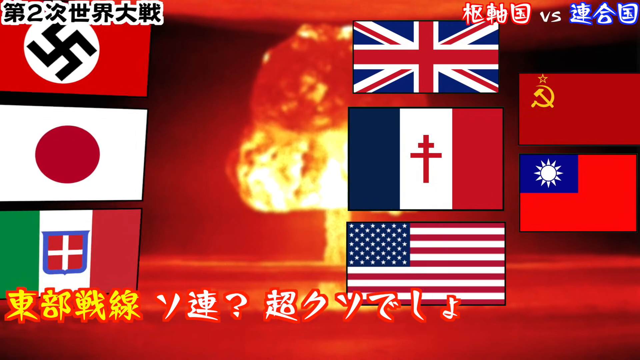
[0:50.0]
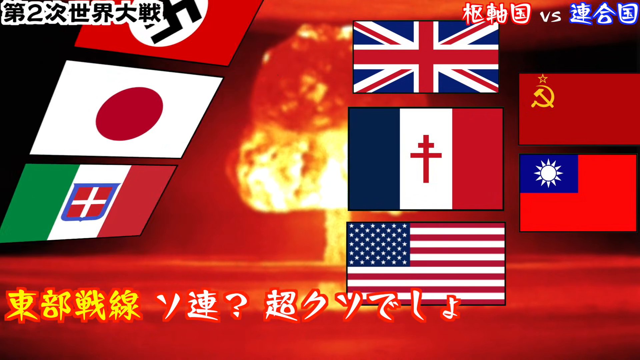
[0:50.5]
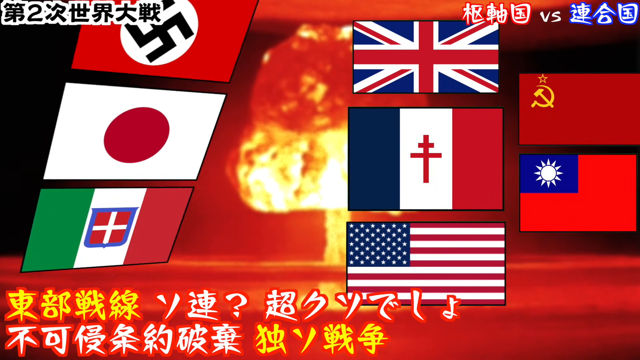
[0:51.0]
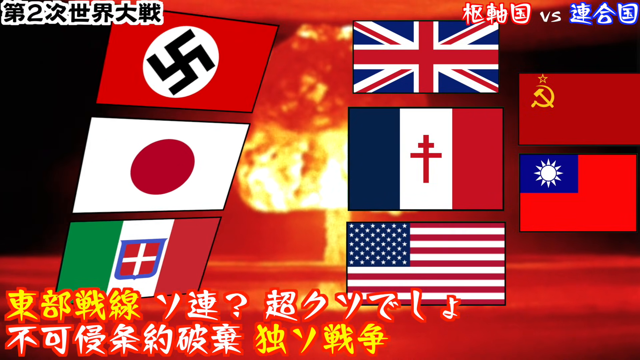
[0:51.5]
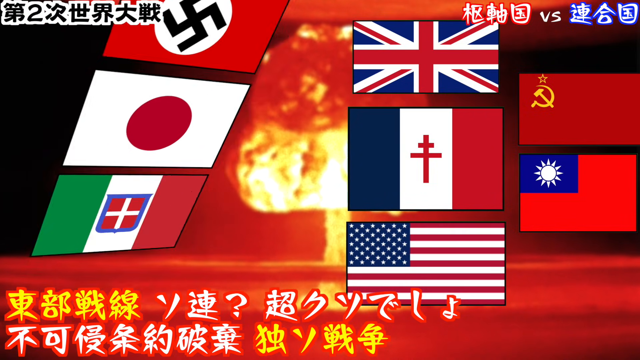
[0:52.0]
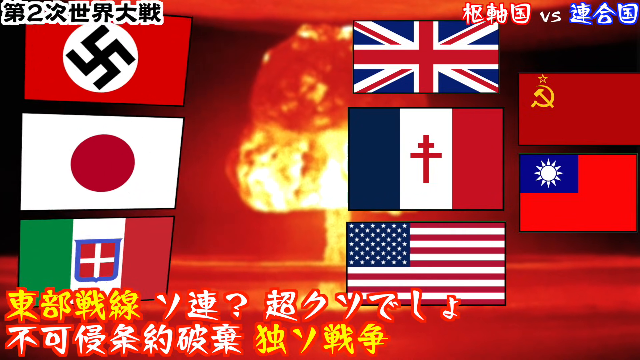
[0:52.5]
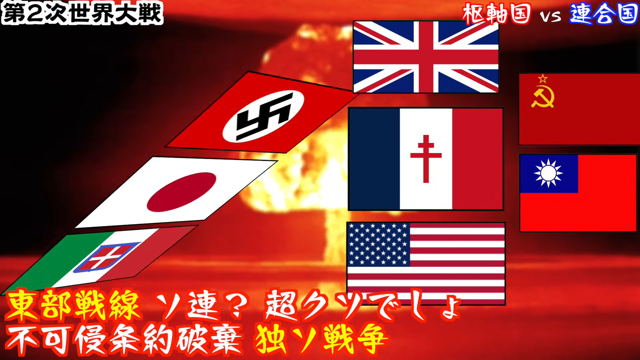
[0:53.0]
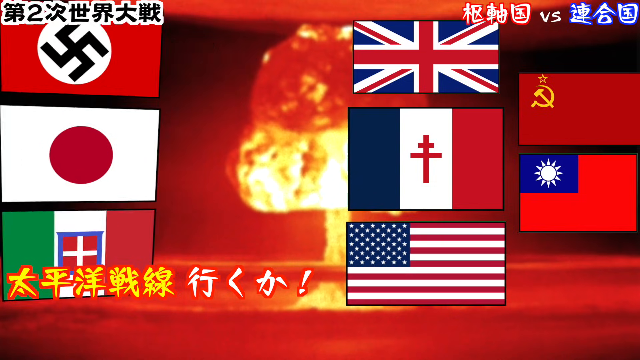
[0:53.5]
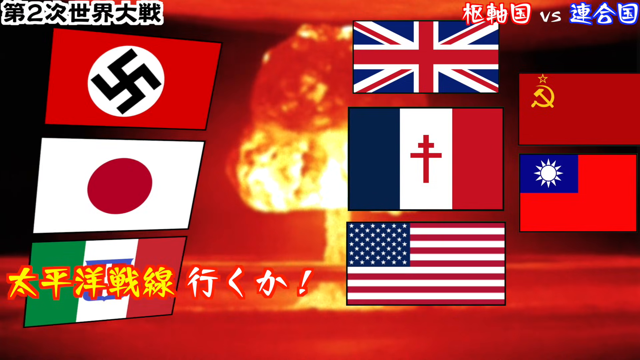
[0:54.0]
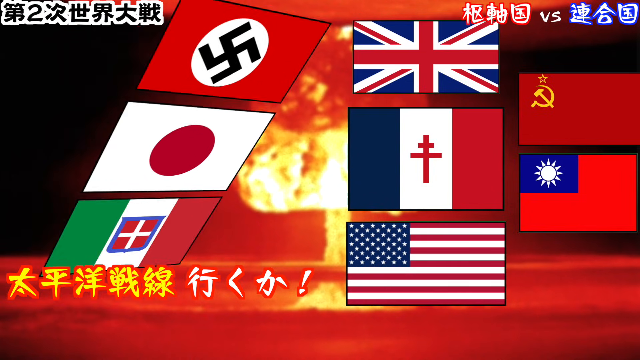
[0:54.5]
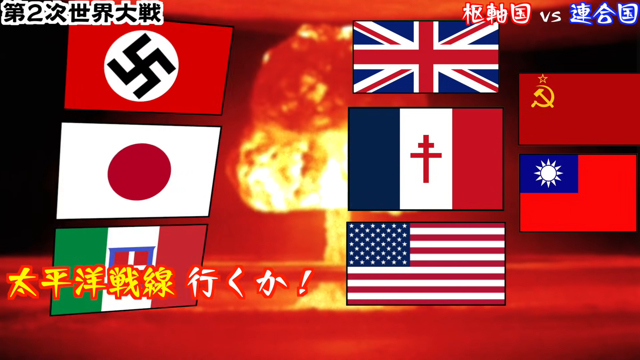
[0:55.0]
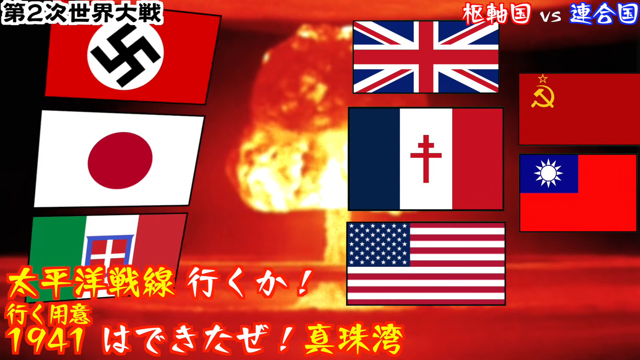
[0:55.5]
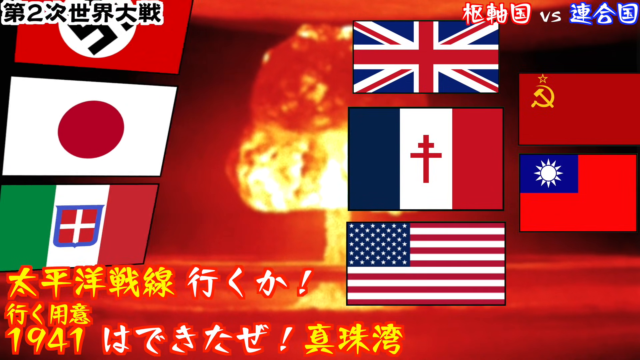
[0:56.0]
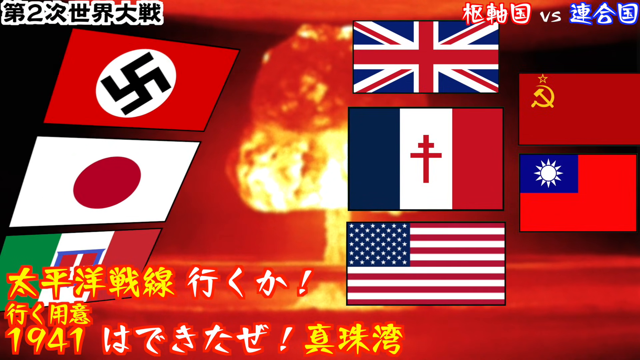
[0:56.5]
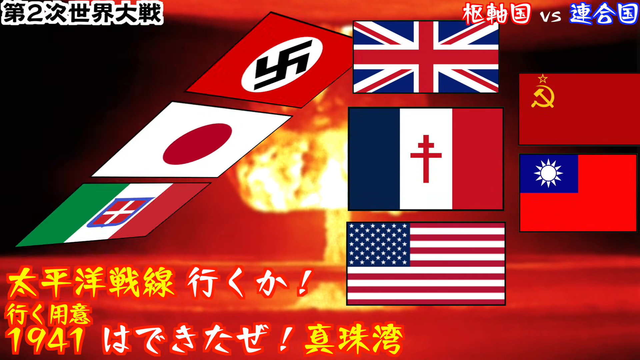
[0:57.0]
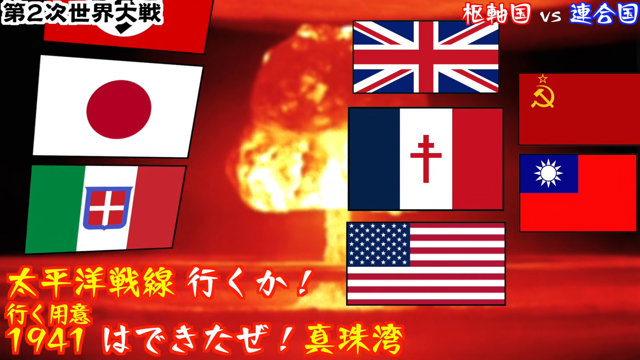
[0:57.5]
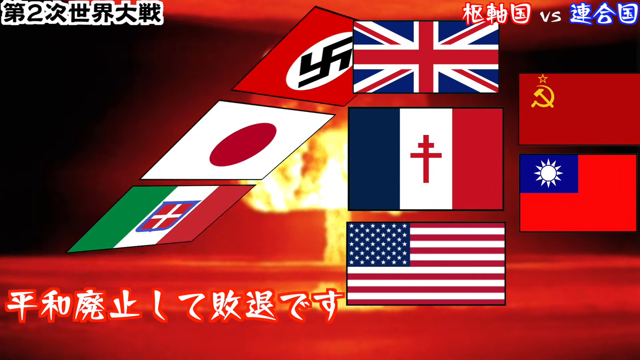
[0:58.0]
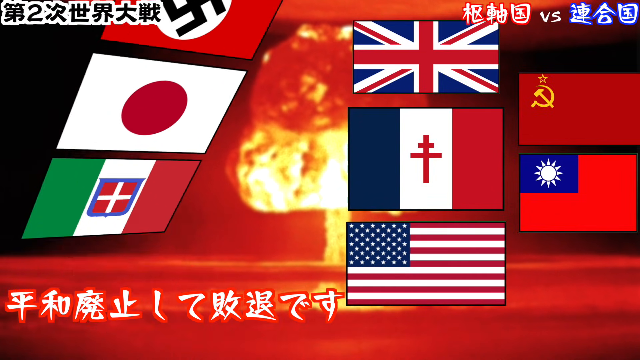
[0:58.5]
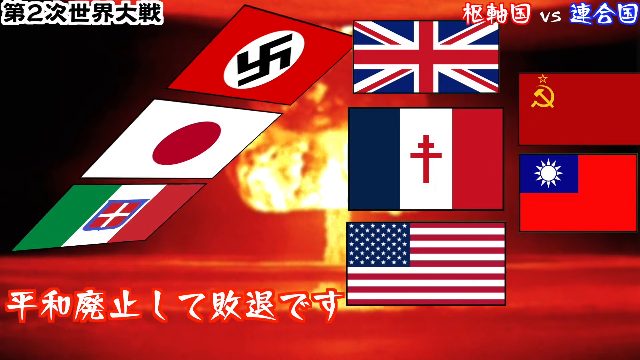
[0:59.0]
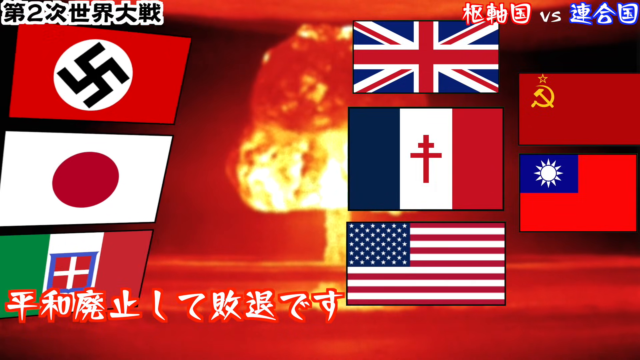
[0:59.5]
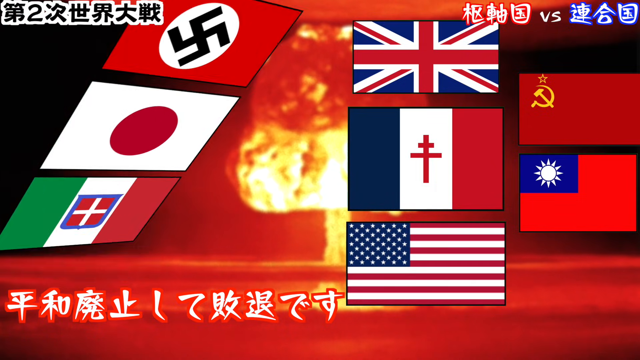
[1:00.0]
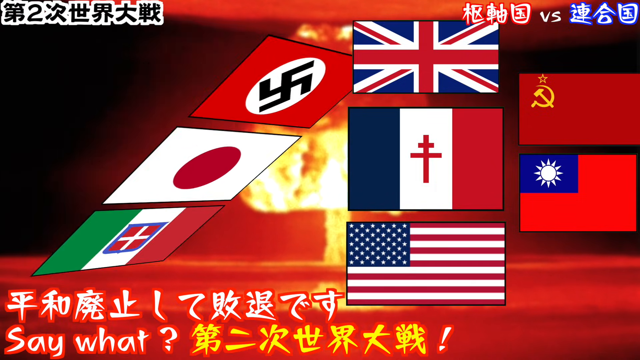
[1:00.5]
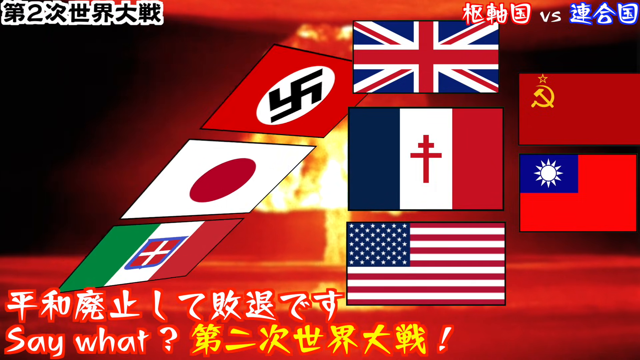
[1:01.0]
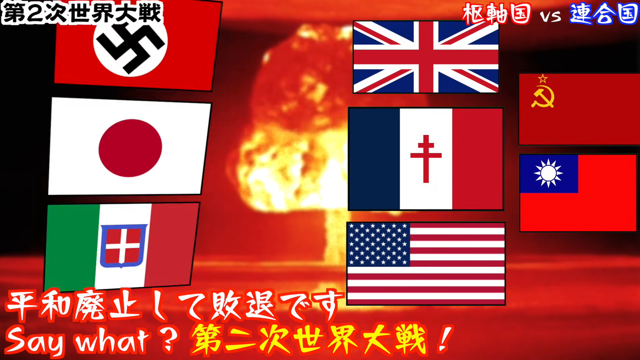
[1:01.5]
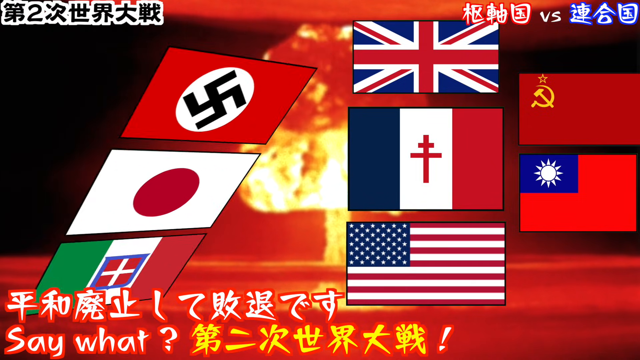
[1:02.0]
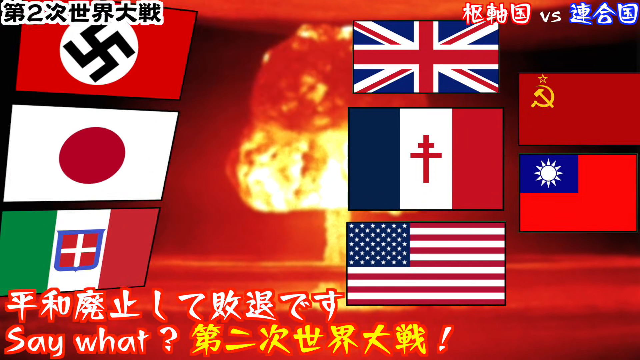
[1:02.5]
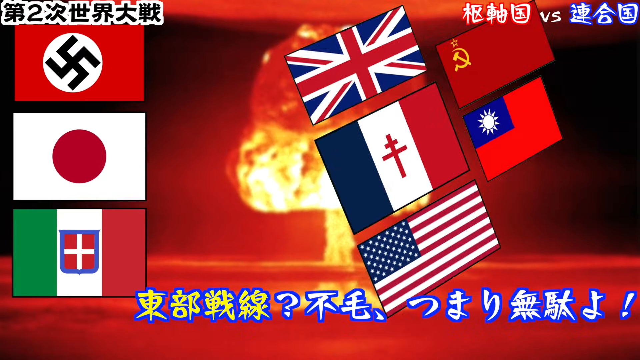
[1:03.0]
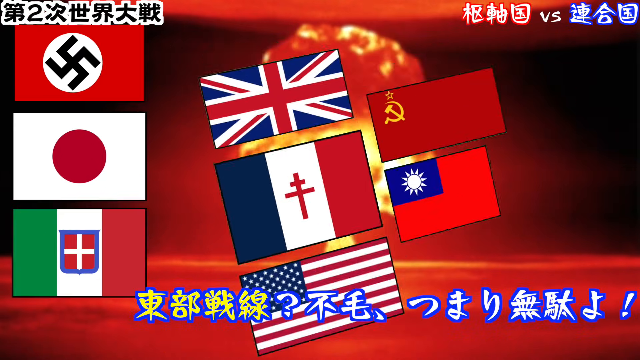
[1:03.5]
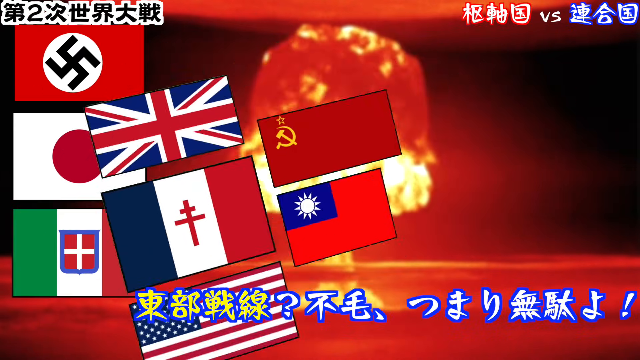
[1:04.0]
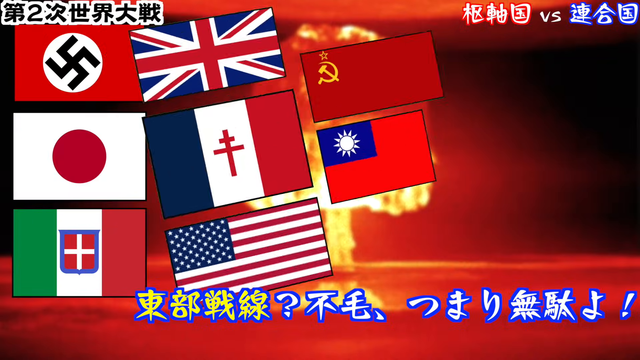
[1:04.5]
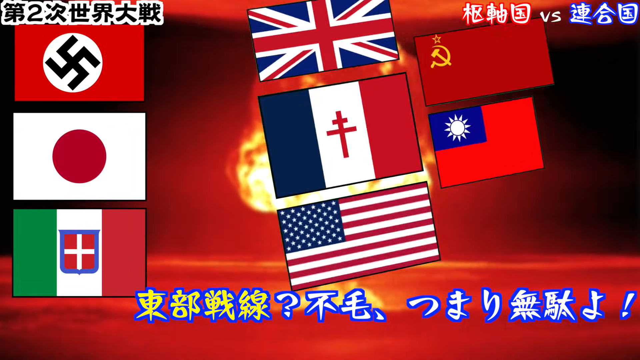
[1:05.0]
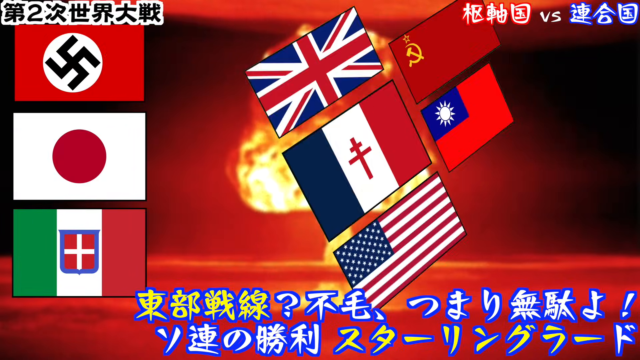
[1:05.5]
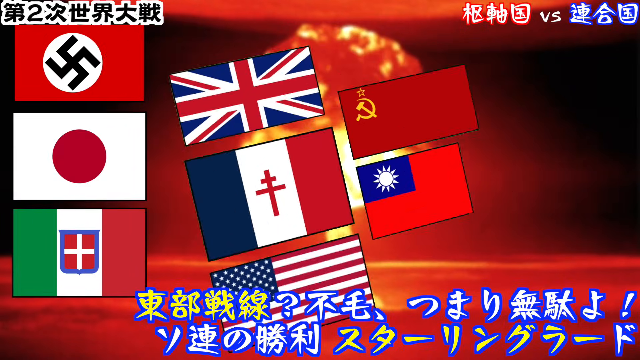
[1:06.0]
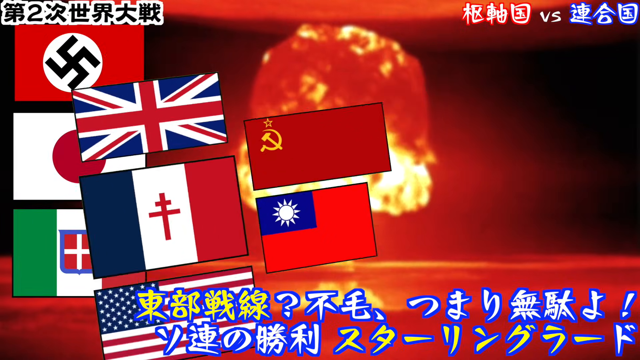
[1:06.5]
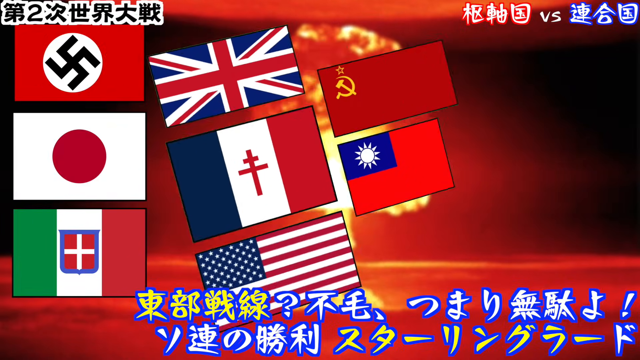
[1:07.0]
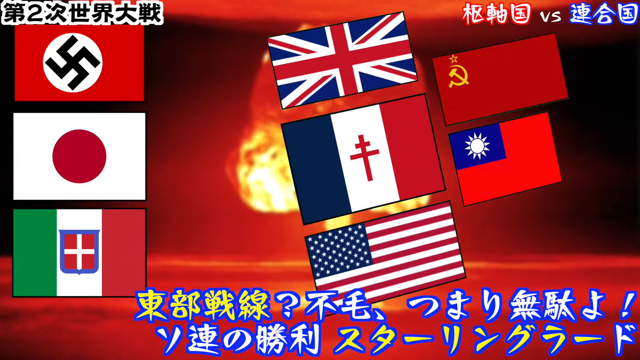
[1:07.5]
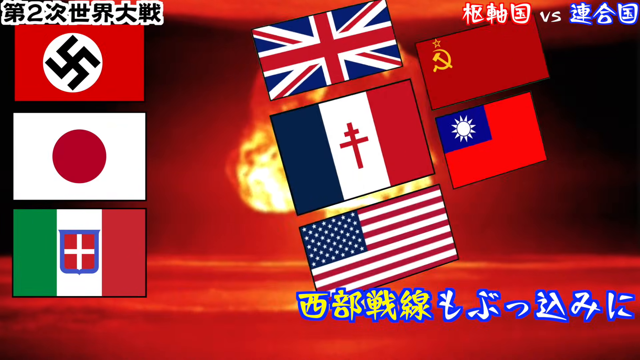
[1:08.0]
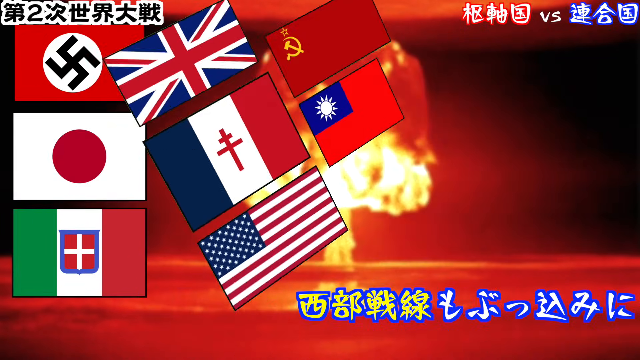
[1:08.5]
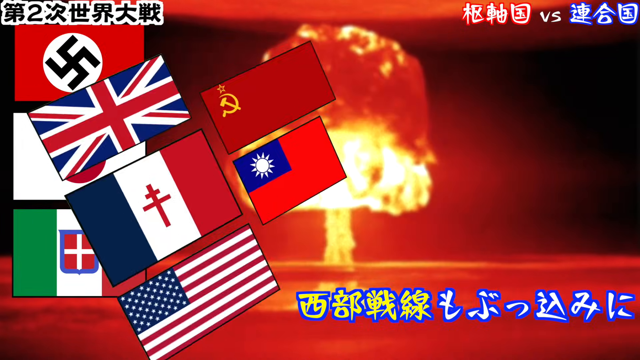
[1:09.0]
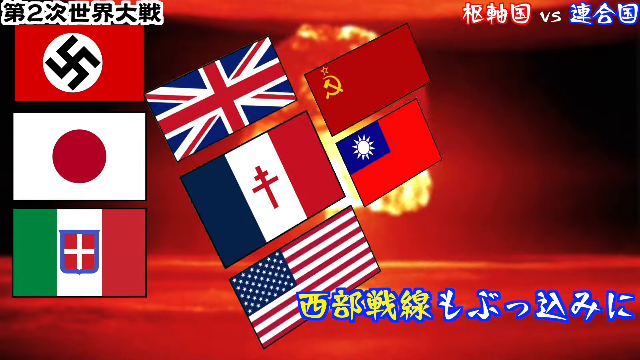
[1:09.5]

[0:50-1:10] On the left side, three flags vibrate toward the other five flags. At times the three flags on the left become still, and the five flags on the right side start vibrating toward the three on the left.